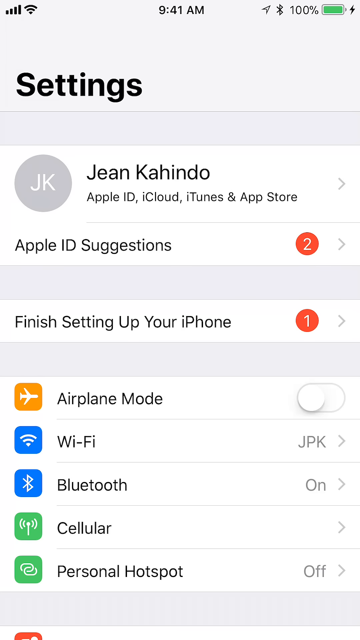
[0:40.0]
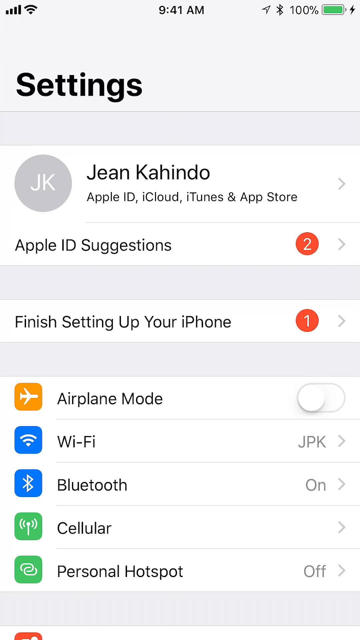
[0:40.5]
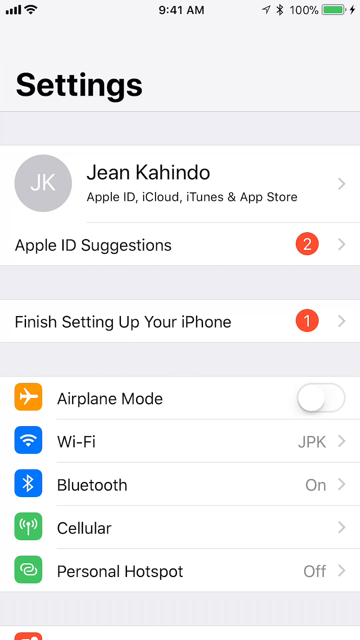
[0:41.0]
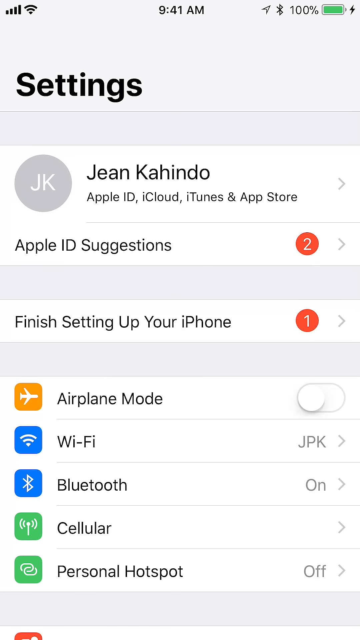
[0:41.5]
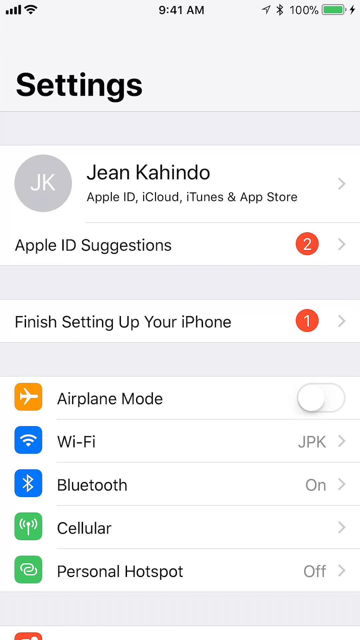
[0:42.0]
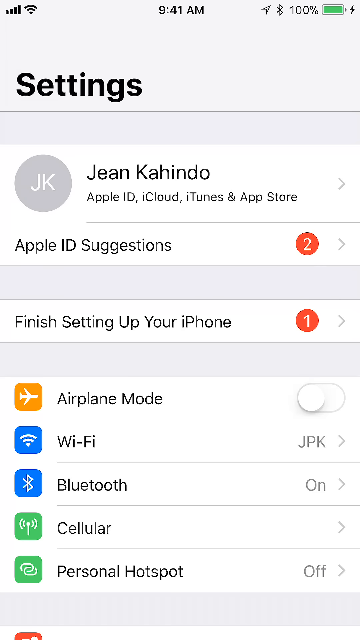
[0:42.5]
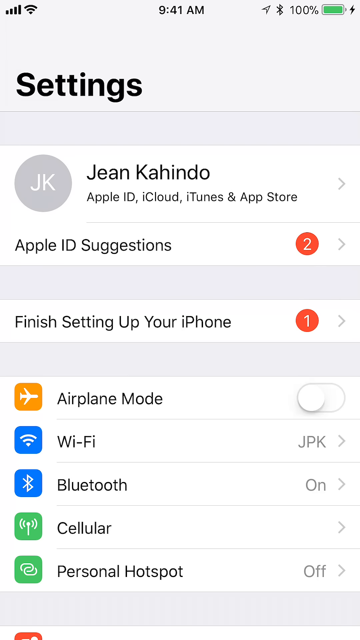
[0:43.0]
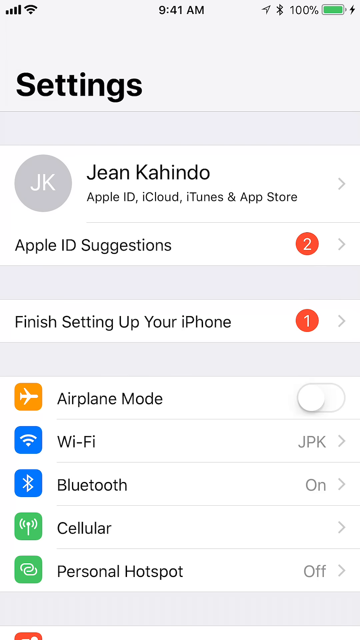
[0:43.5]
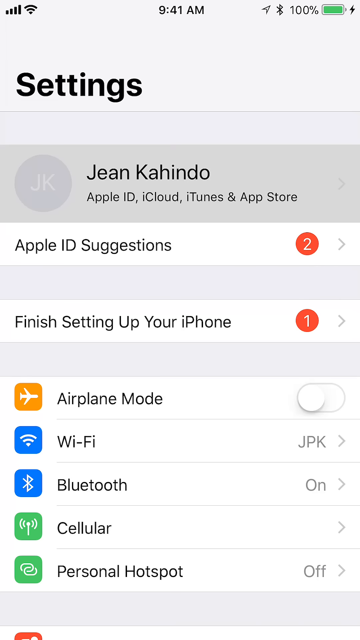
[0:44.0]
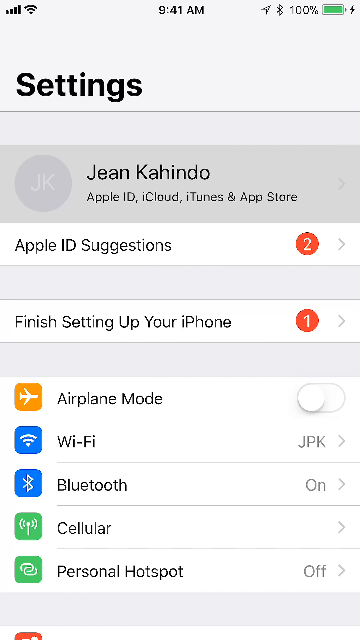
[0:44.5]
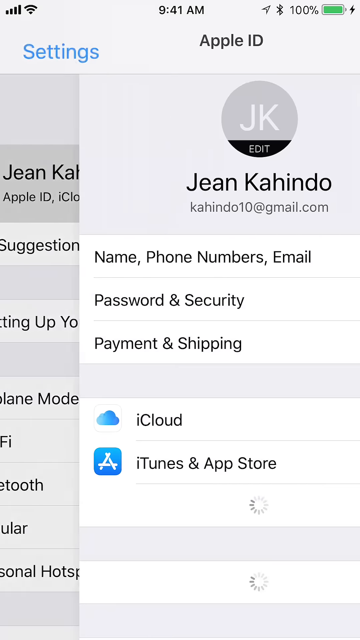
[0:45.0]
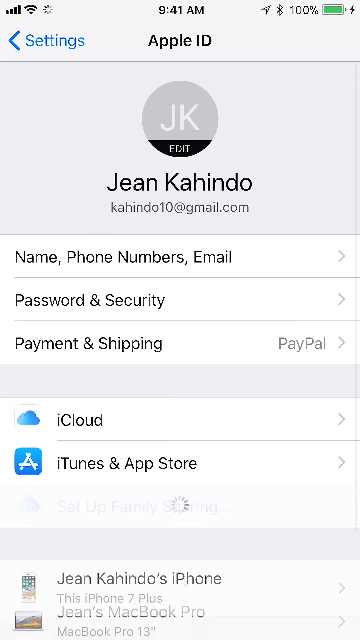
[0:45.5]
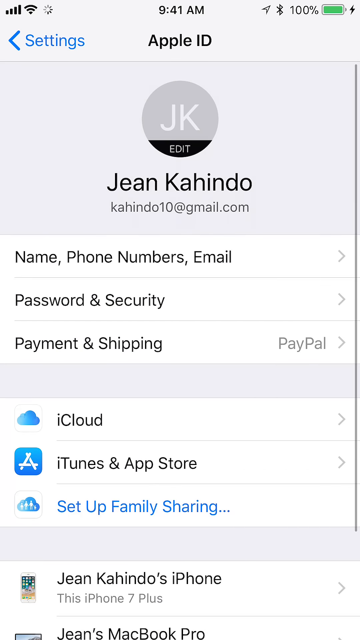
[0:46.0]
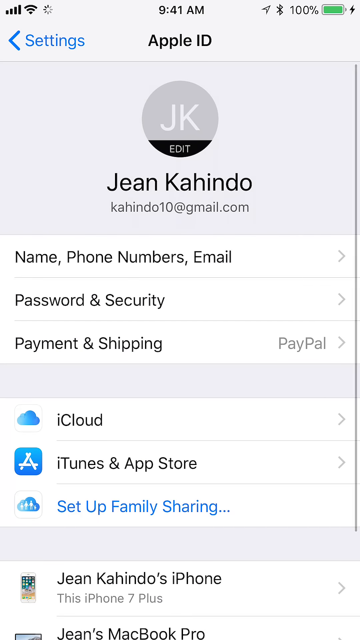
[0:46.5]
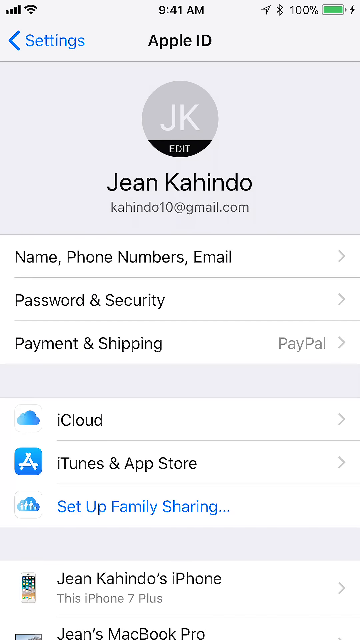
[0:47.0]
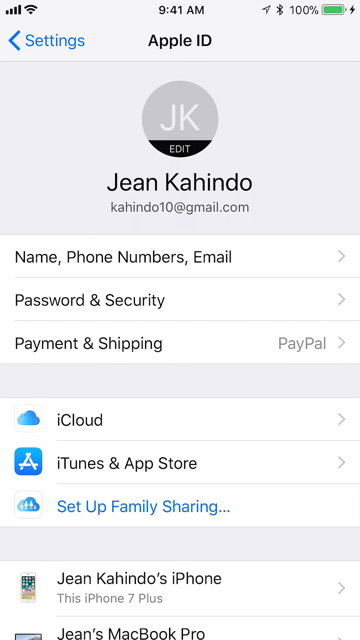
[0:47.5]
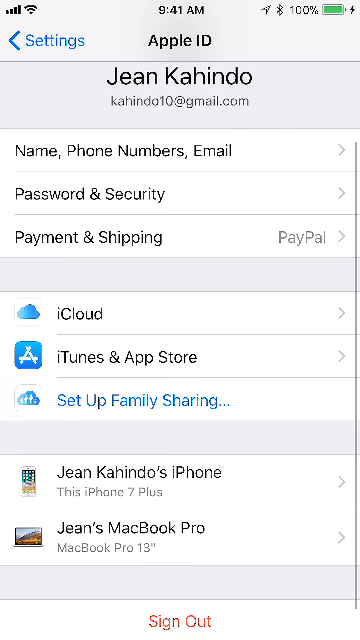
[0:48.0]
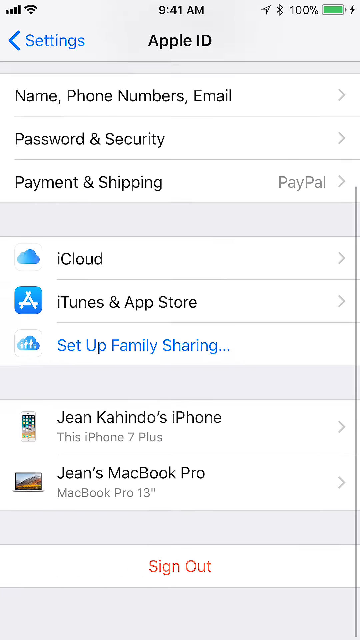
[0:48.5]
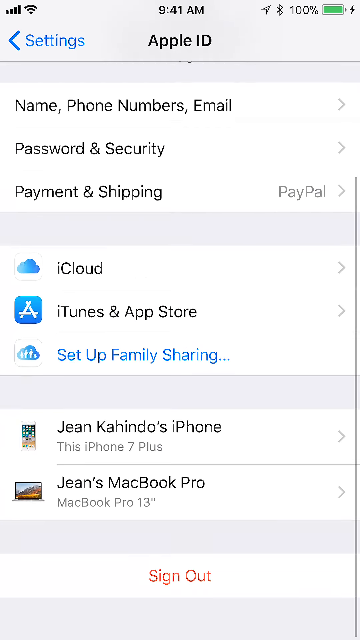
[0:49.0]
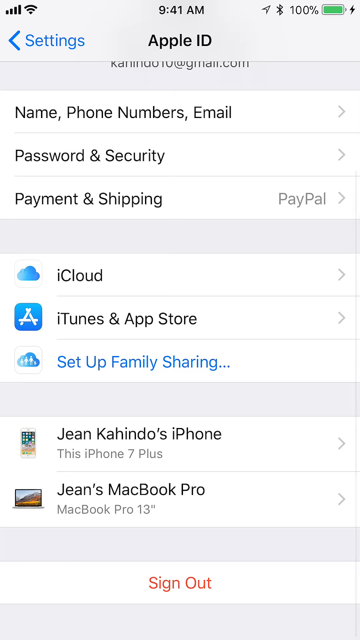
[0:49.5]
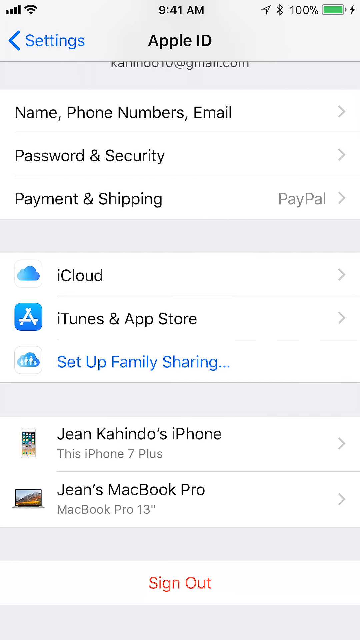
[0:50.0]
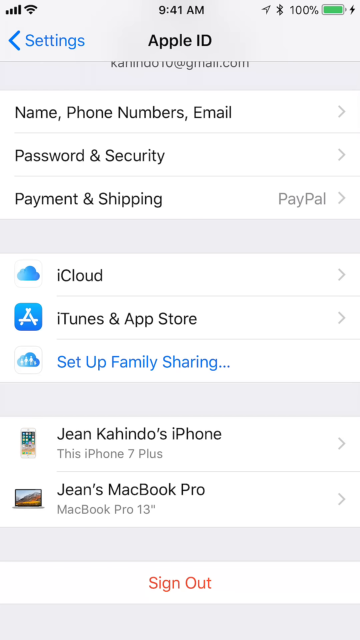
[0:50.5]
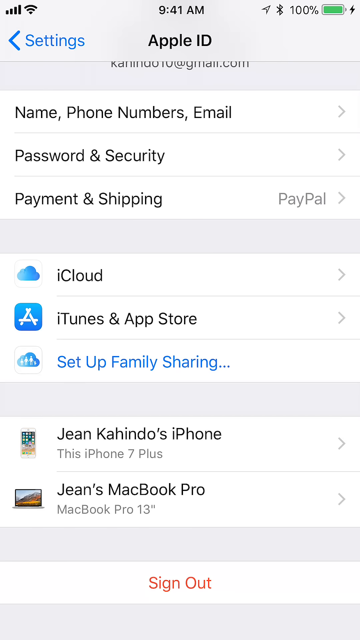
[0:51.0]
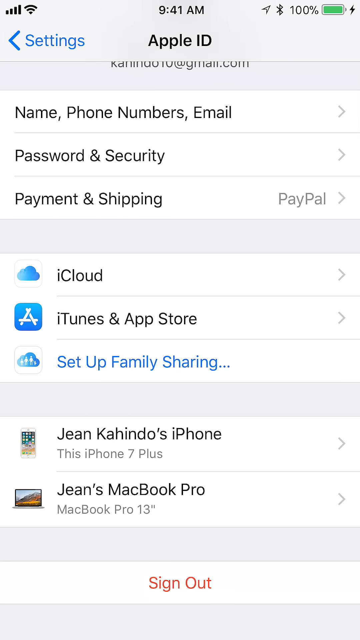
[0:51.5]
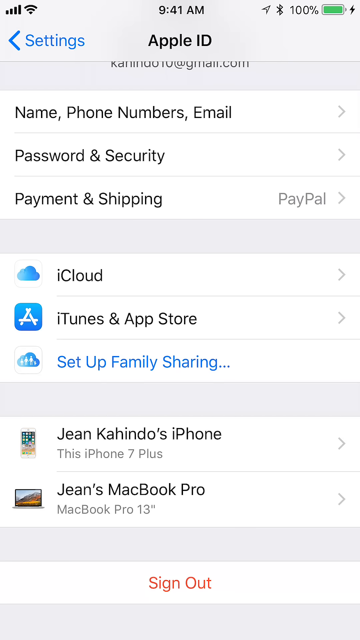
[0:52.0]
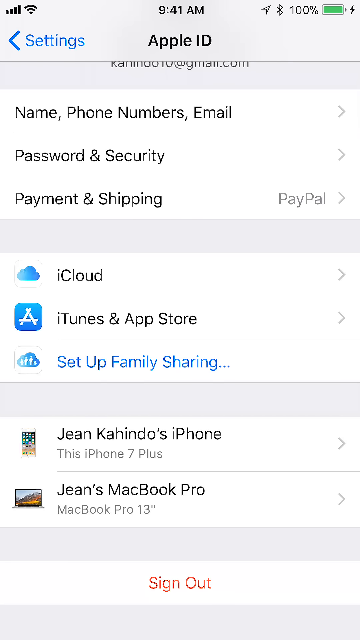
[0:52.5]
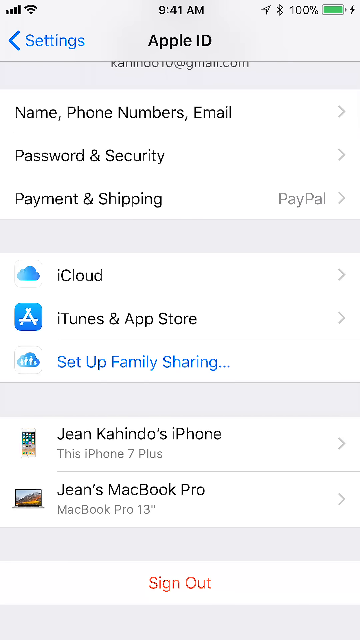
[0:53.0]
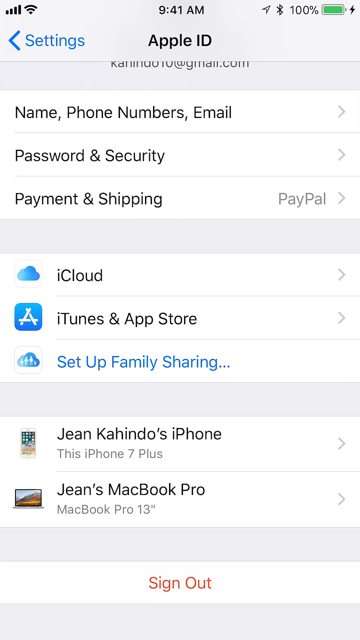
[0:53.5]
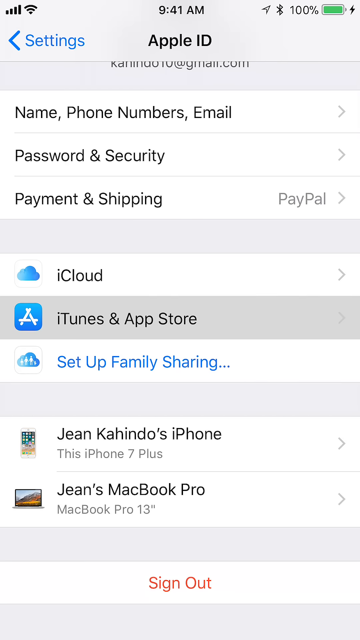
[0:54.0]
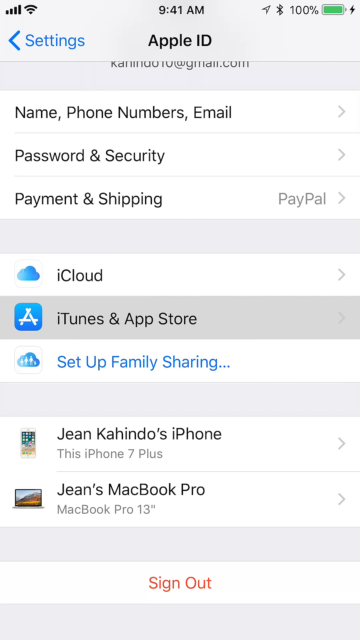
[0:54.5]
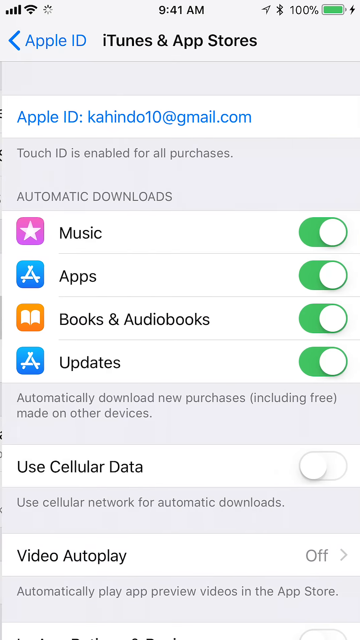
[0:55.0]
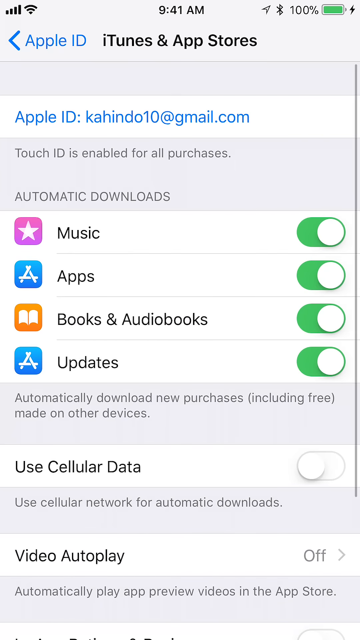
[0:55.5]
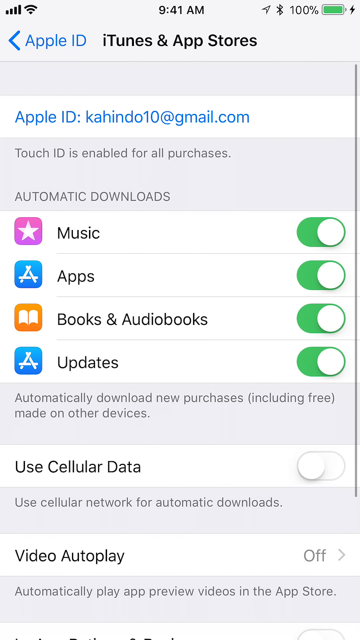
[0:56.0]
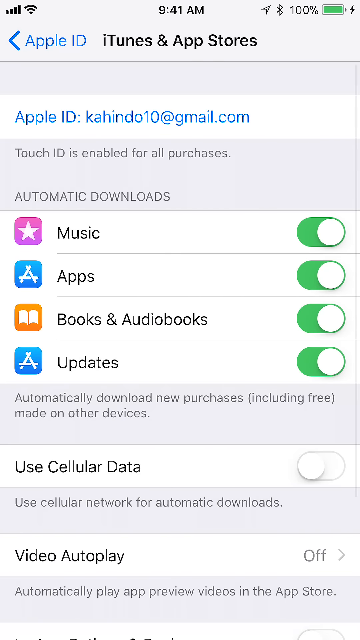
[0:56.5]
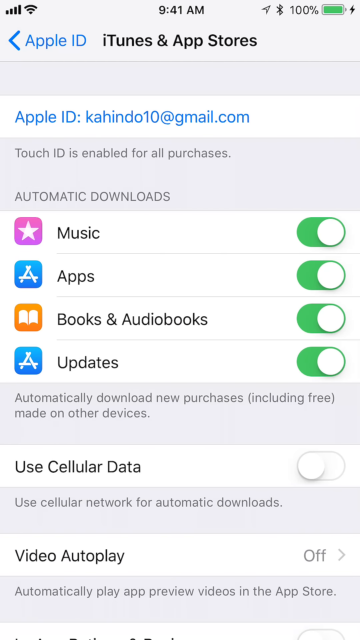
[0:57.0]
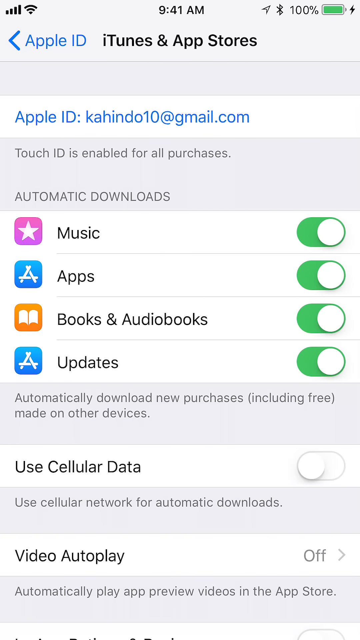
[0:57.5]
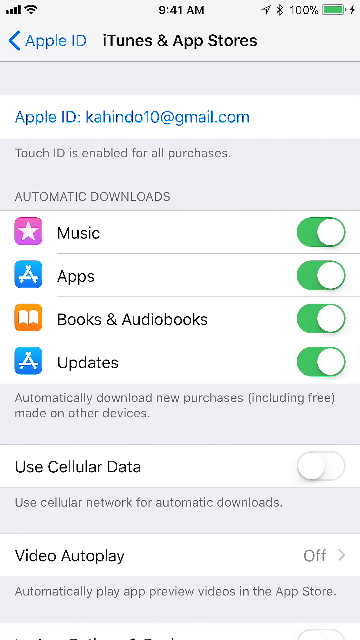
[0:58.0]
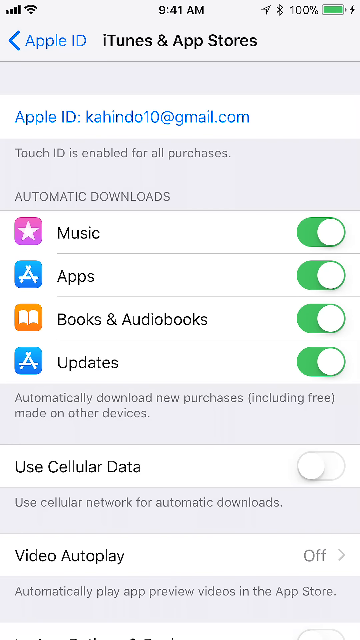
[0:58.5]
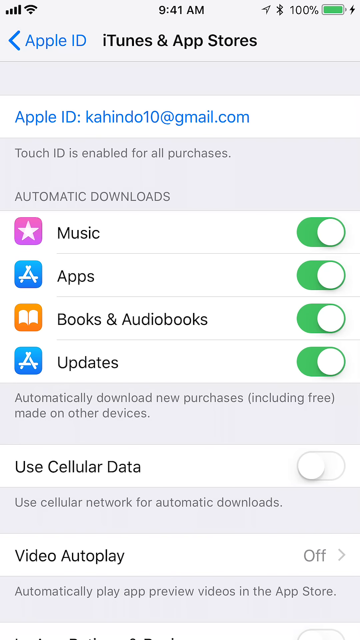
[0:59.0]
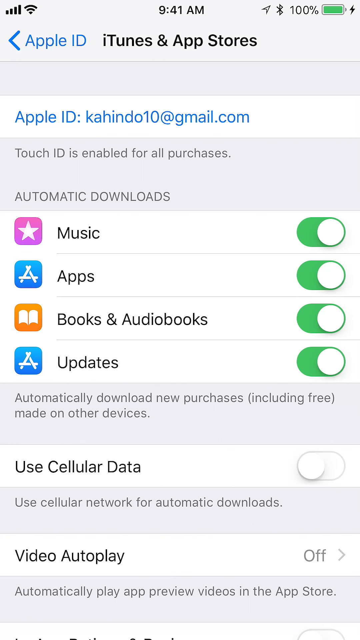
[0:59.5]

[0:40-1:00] What looks like an iPhone screen has a heading at the top that says "Settings", with the person's name underneath in black text. There is a menu with links that reads "airplane mode", "wifi", "bluetooth", "cellular" and "personal hotspot", with icons for them. In the top right of the screen the battery reads 100%, and the time is 9:41 AM. Next to the person's name is a gray circle with the white text "JK", the person's initials. Underneath it says "Apple ID suggestions", with the number 2 in white text to the right, set in a red circle. Below that is another red circle with the number 1, and to the left of it the text "finish setting up your iPhone".